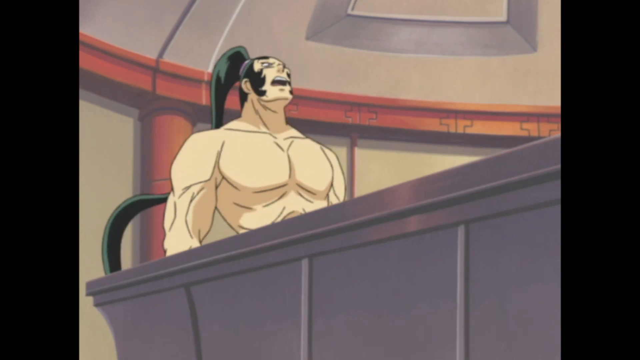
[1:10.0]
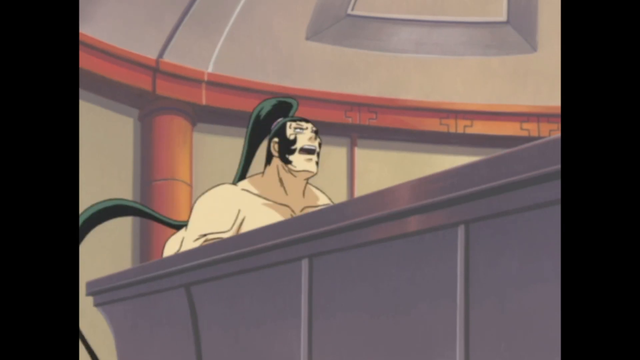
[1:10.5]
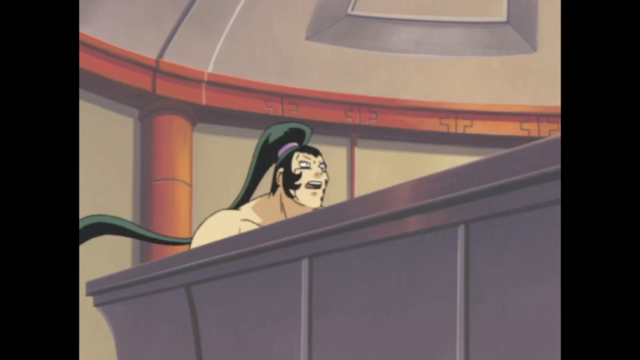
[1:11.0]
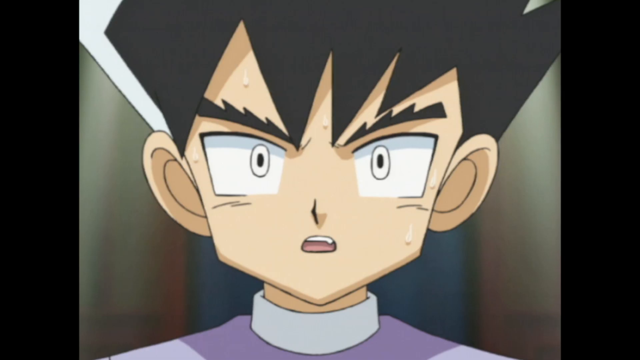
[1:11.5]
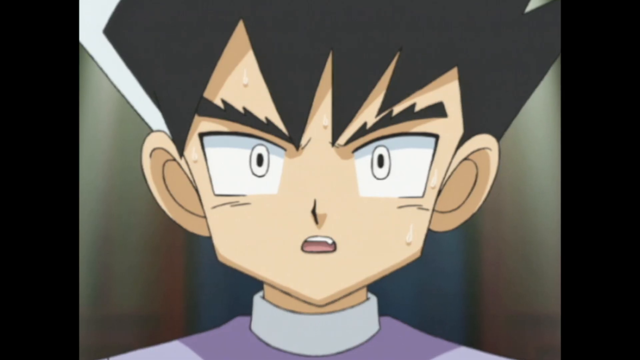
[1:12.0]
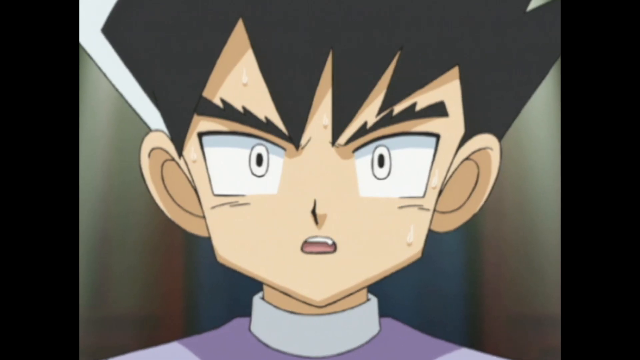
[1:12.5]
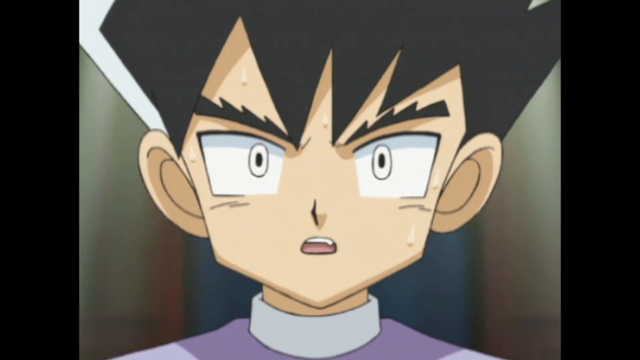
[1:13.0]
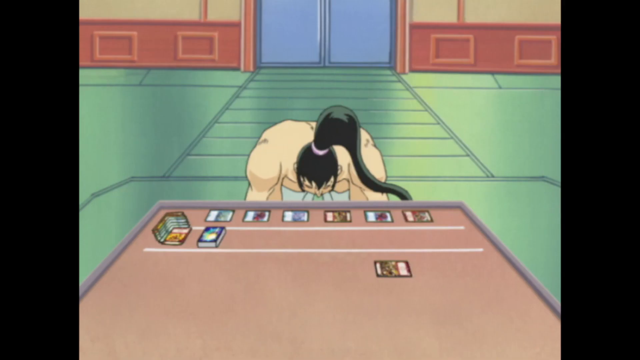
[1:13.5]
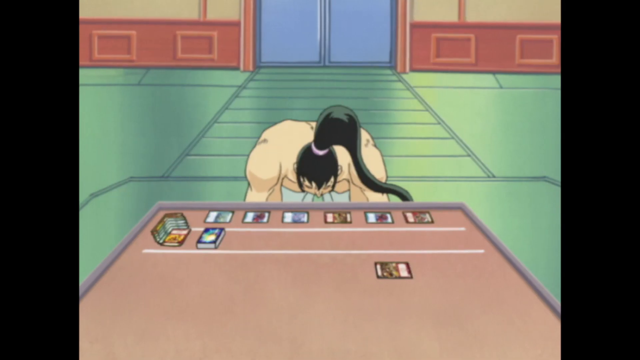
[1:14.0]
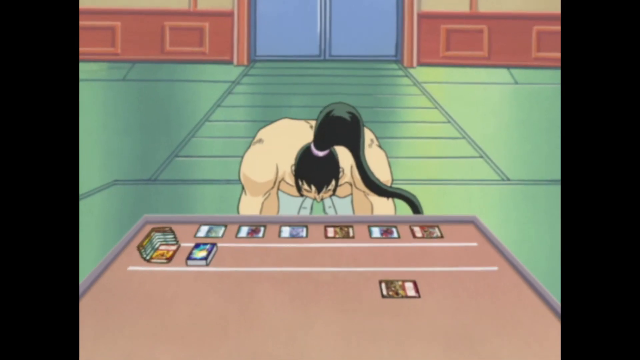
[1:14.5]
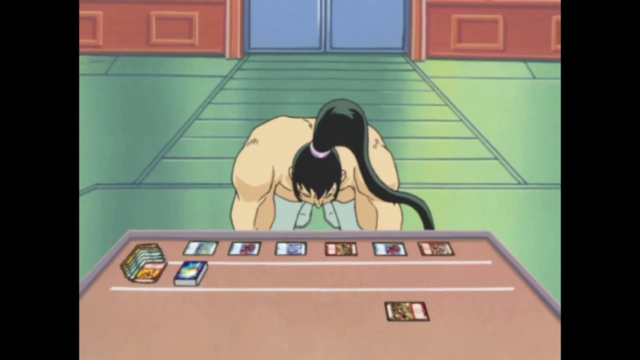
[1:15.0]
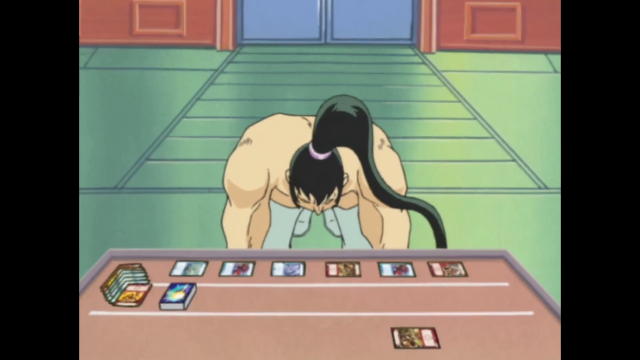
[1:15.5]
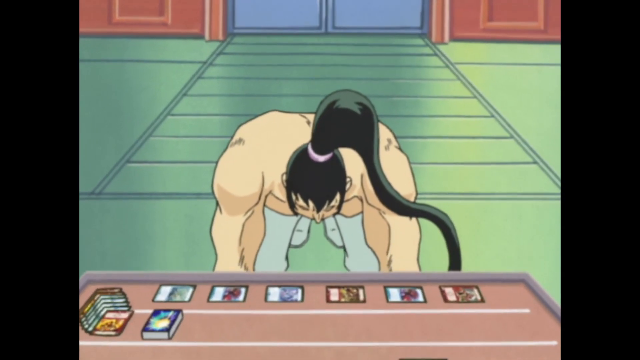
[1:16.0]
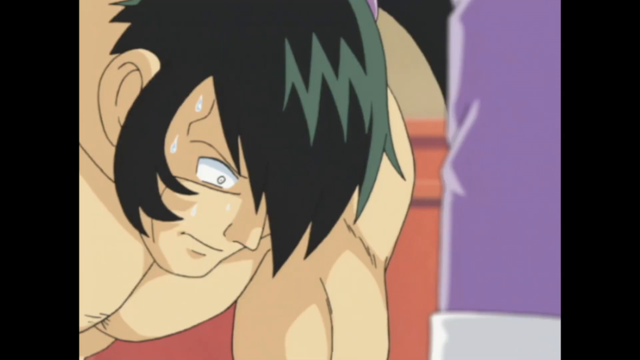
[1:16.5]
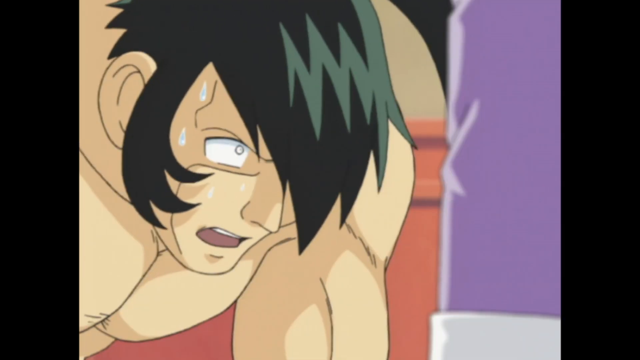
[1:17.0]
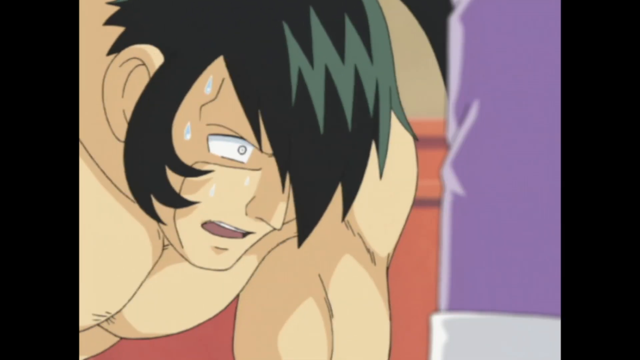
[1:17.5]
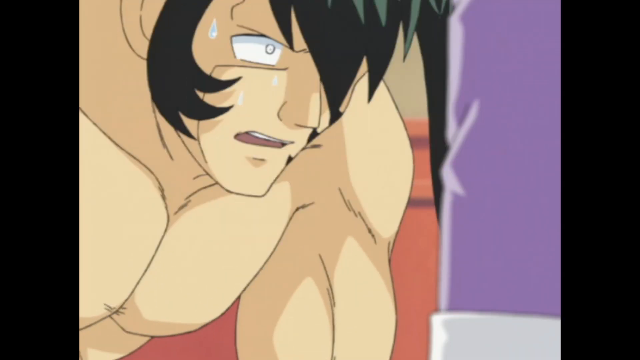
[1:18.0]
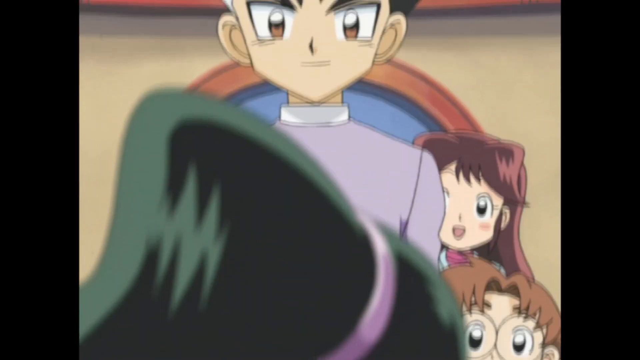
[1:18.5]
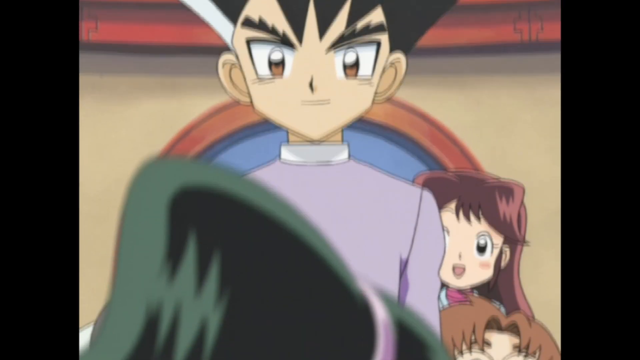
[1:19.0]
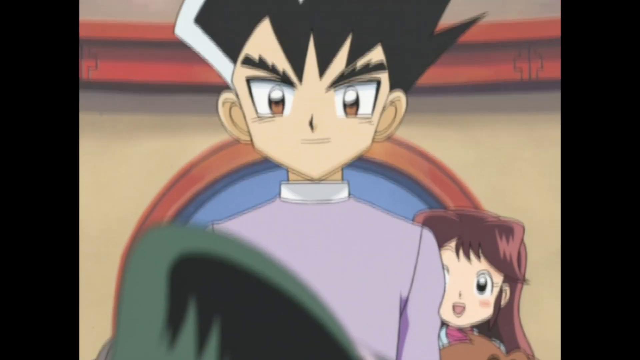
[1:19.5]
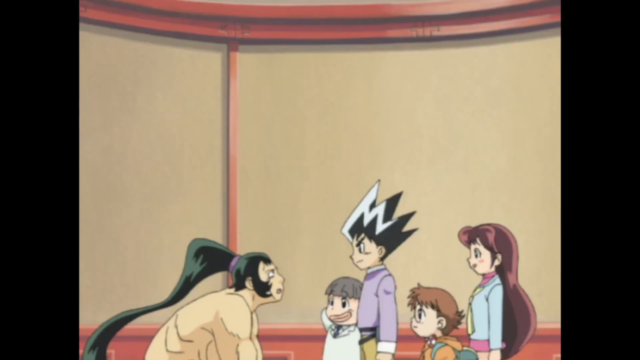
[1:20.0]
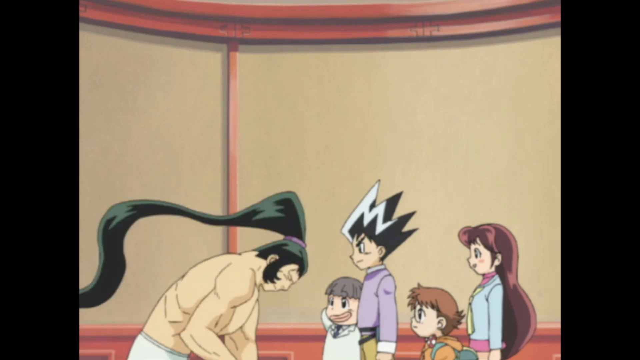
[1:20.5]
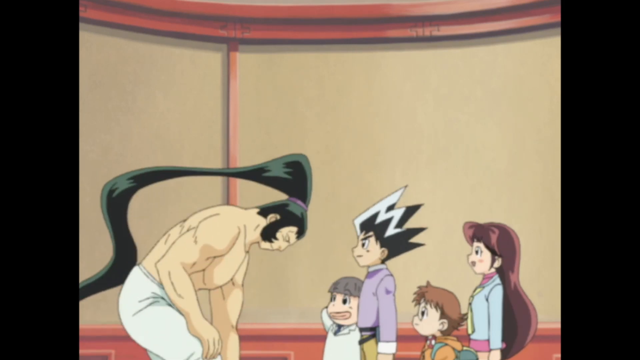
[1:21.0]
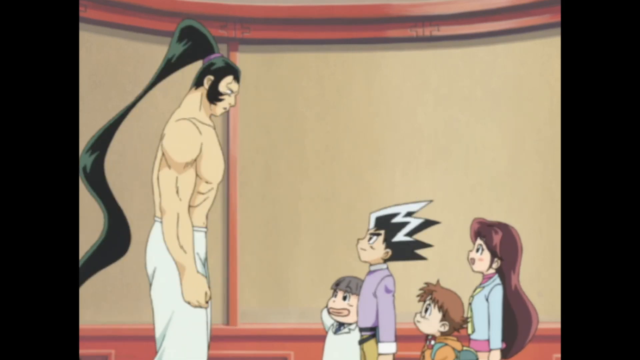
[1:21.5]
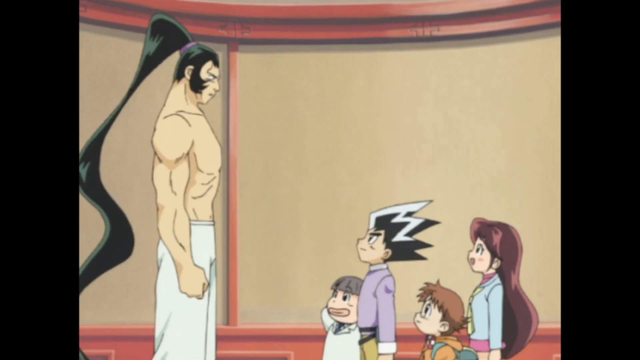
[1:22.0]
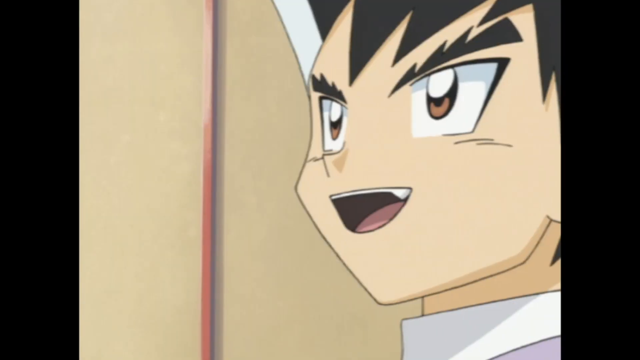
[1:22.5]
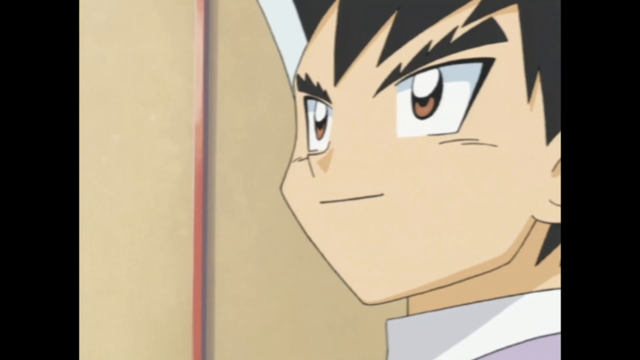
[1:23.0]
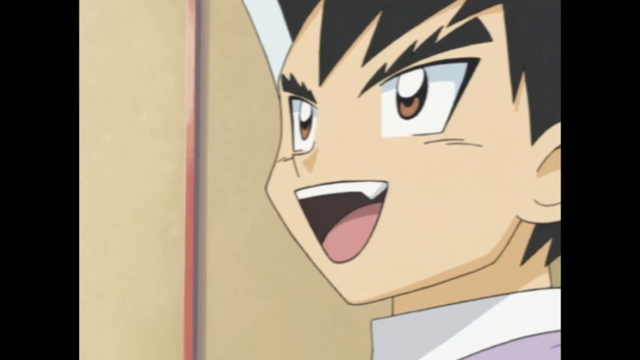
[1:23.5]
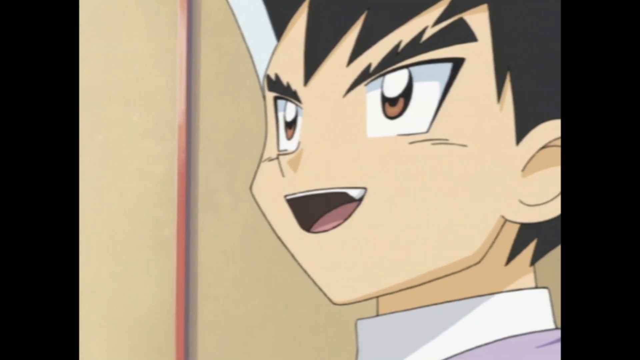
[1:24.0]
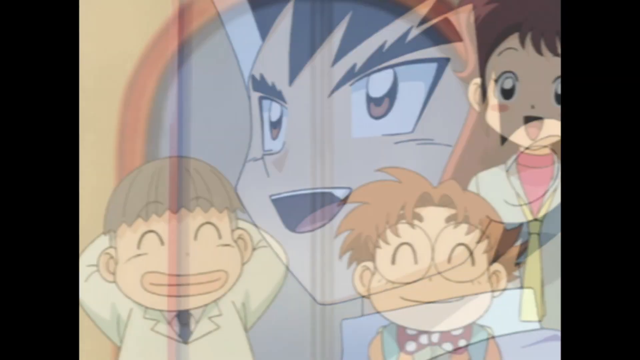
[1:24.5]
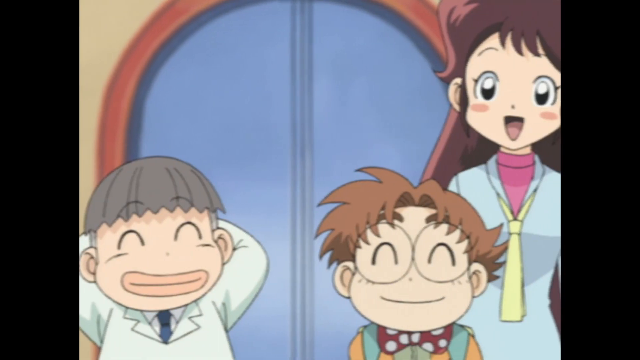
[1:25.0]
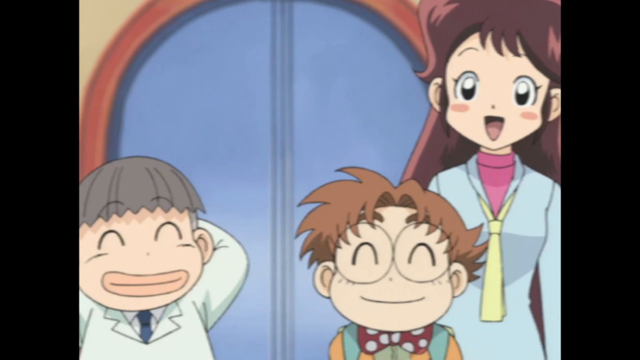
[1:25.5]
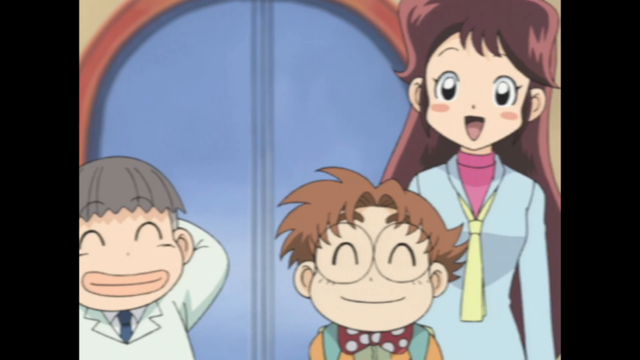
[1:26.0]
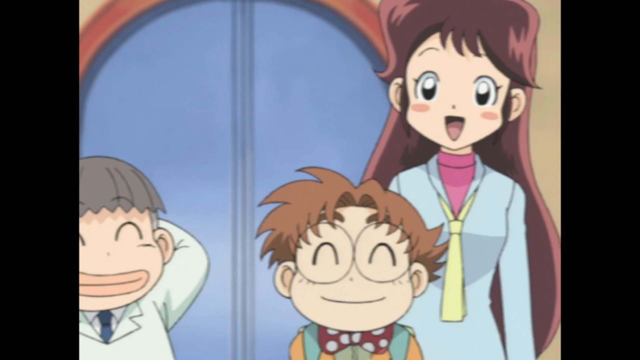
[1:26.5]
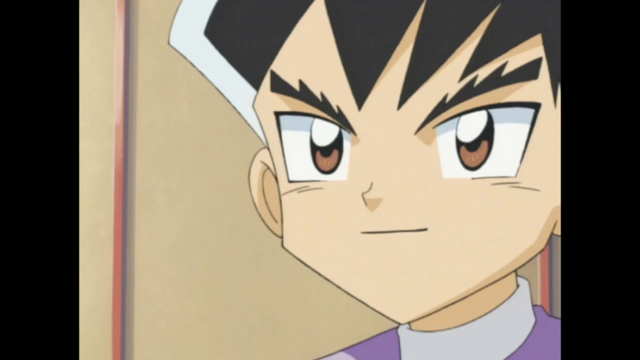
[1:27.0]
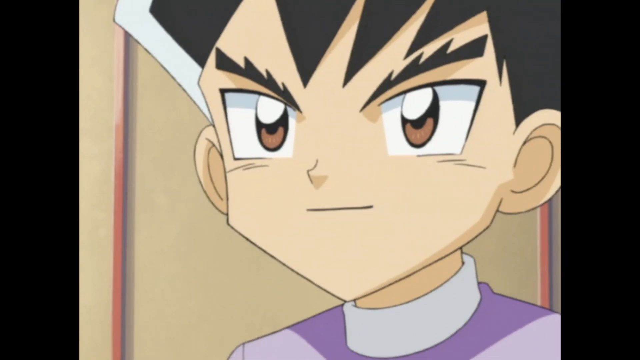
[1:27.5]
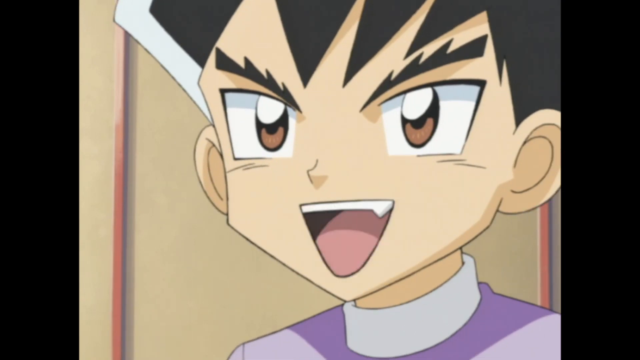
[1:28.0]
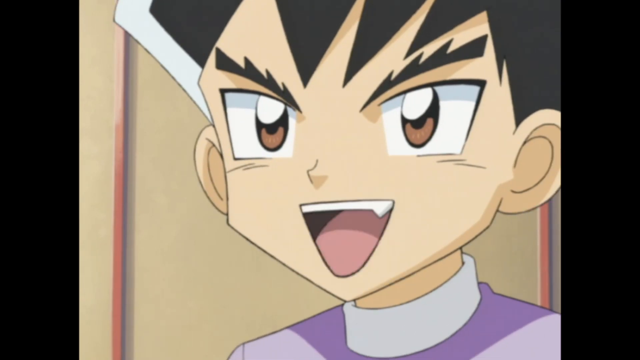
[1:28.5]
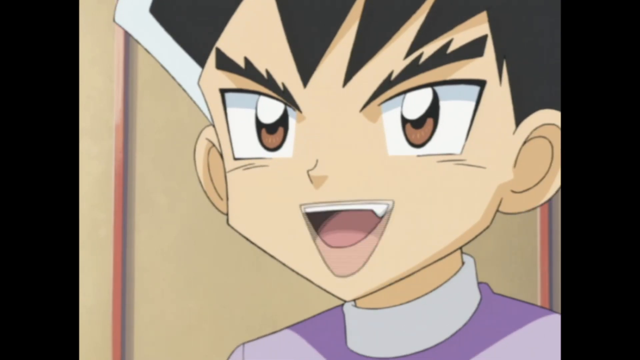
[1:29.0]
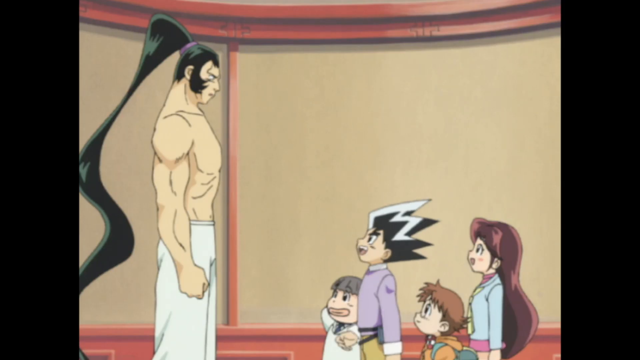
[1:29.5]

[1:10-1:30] The shirtless guy looks up, bows down and looks down. The cards are still on the table, the floor is green, and the door is closed; they are still in the house. The other young adult, wearing a purple sweater or top, comes over. The shirtless guy looks at him and gets up, and the young man talks. The young adult in purple is shorter; the shirtless guy is big and muscular. In the background the three kids, the girl and the two boys, listen happily and smile; the two boys close their eyes, and the girl looks amazed with her mouth and eyes wide open. The door in the background is bluish. The young man, whose hair is dyed black and white, talks and stretches out his hand to greet his opponent, backed by the three kids.